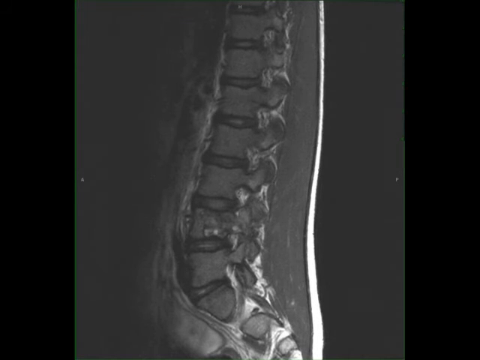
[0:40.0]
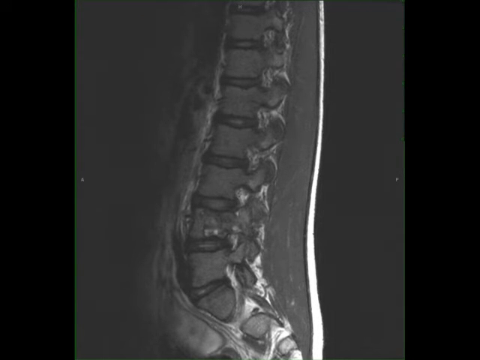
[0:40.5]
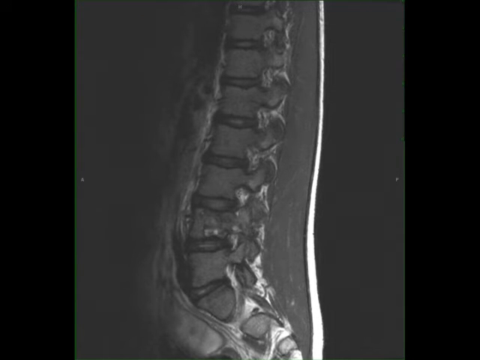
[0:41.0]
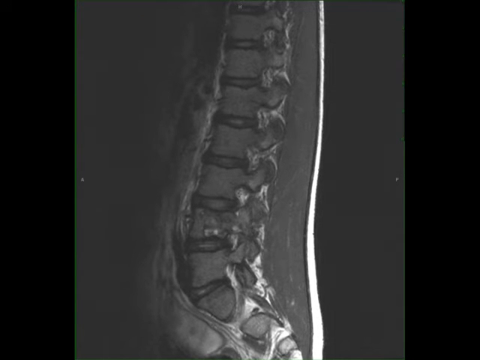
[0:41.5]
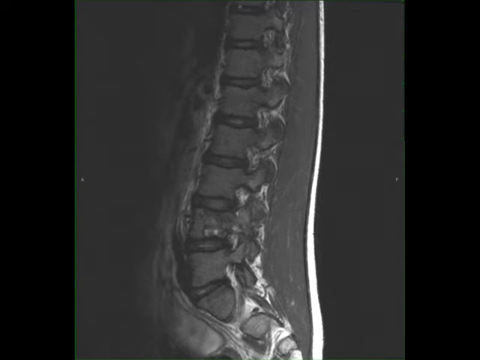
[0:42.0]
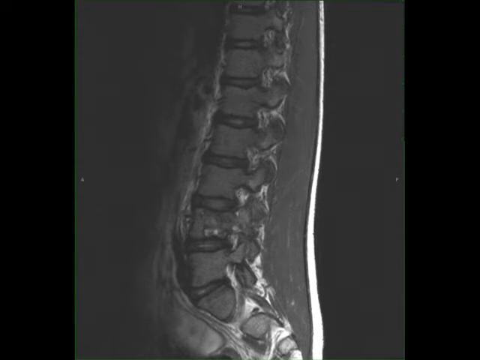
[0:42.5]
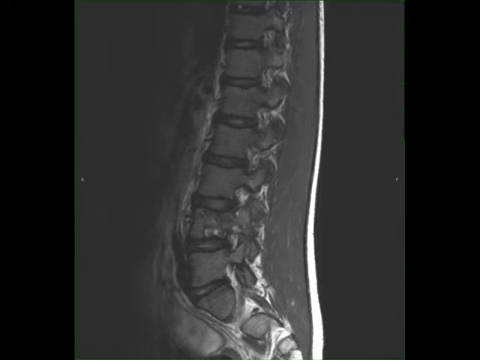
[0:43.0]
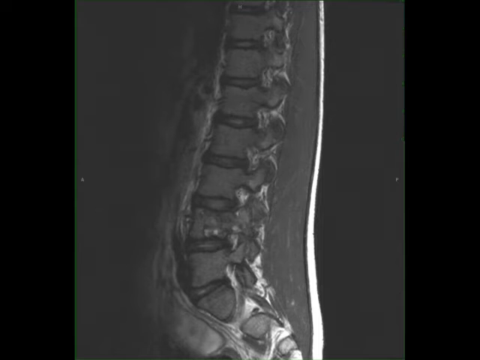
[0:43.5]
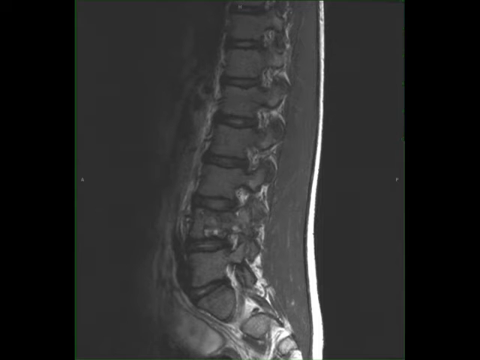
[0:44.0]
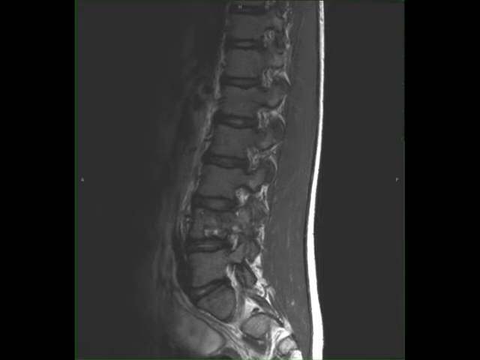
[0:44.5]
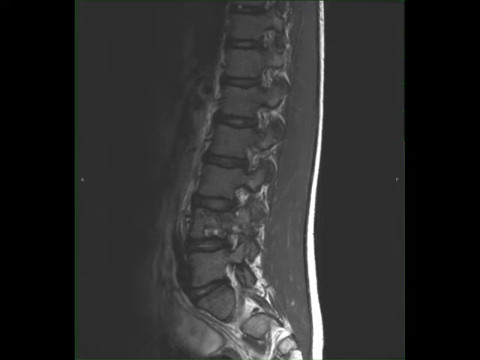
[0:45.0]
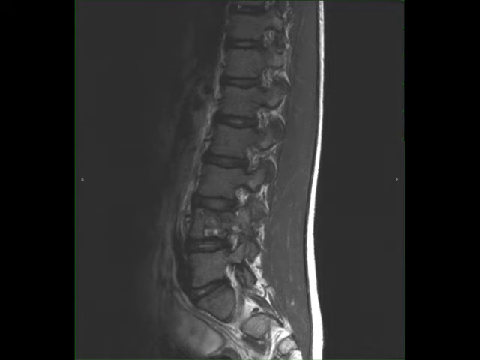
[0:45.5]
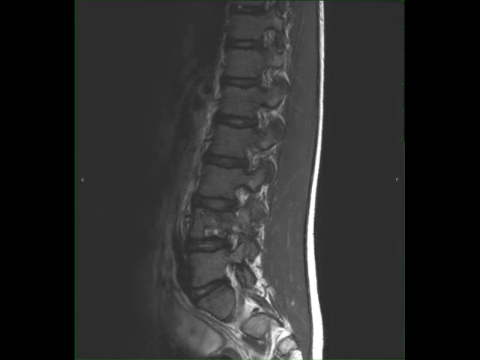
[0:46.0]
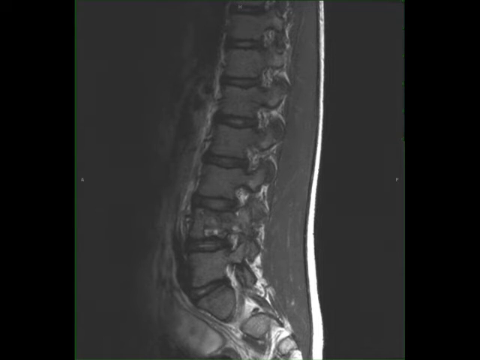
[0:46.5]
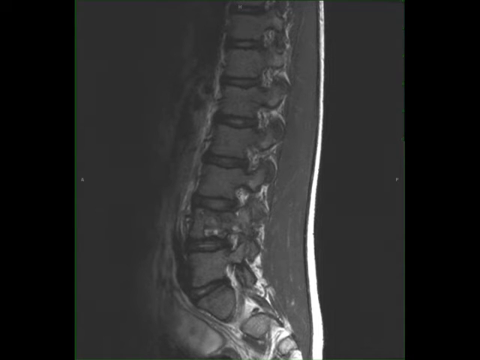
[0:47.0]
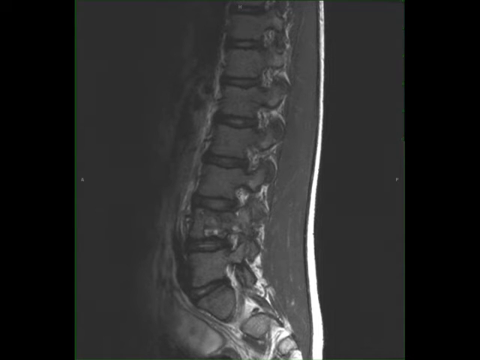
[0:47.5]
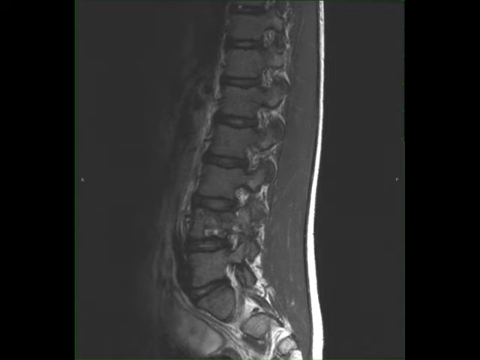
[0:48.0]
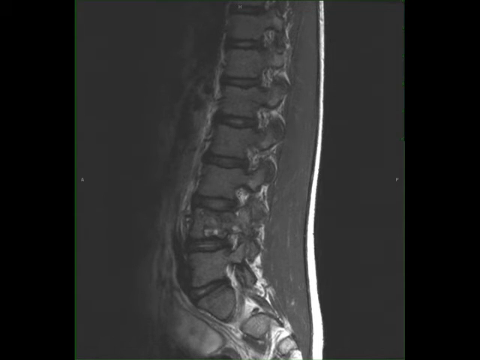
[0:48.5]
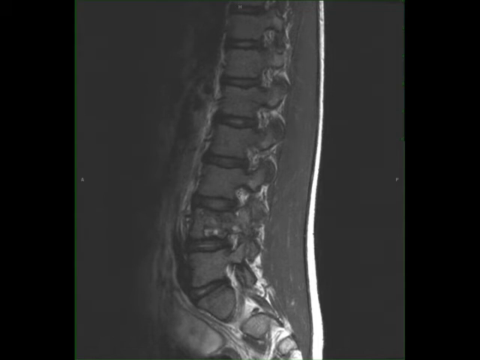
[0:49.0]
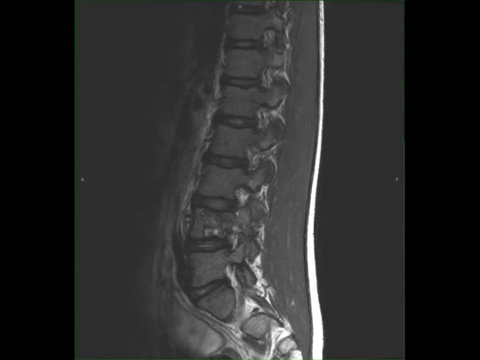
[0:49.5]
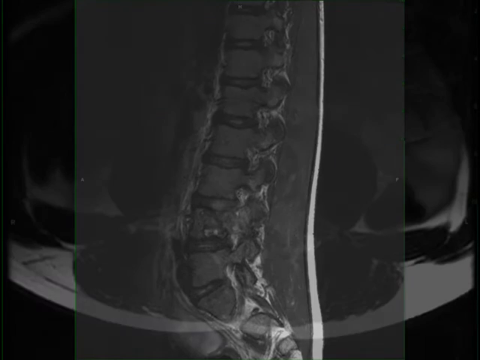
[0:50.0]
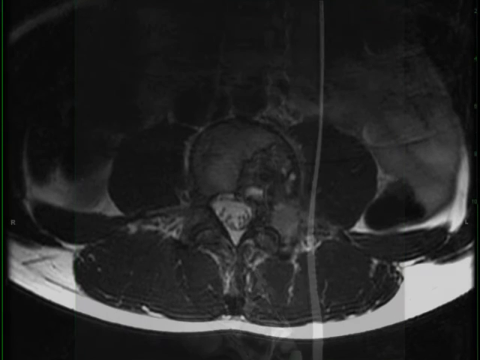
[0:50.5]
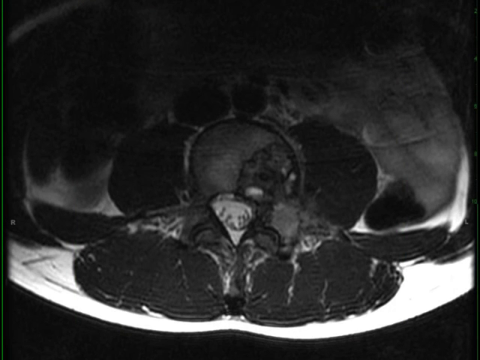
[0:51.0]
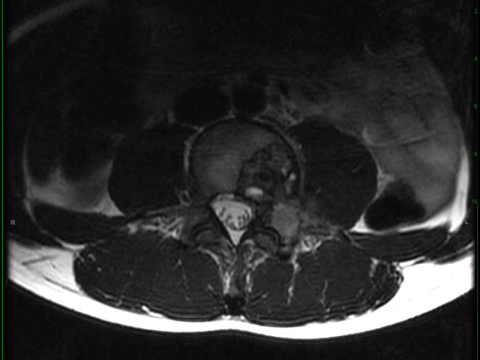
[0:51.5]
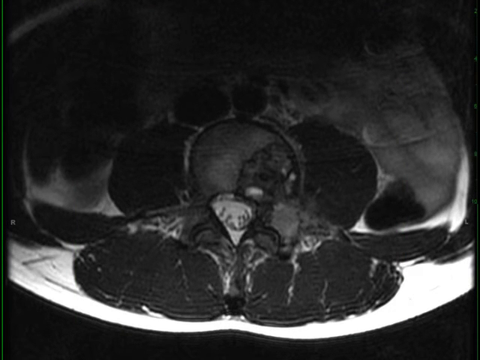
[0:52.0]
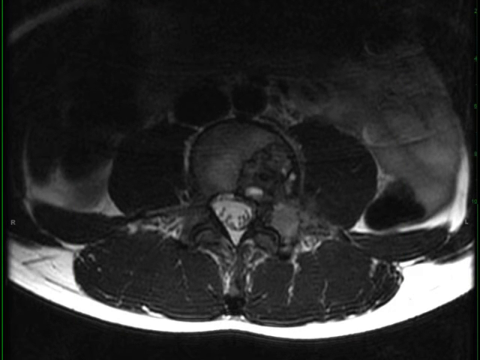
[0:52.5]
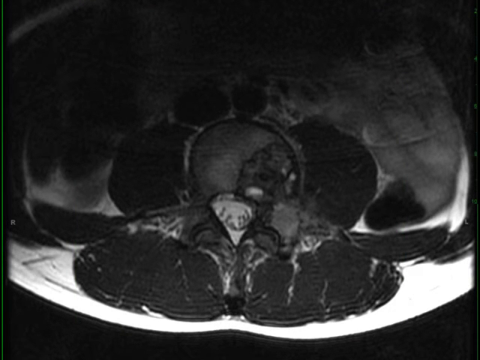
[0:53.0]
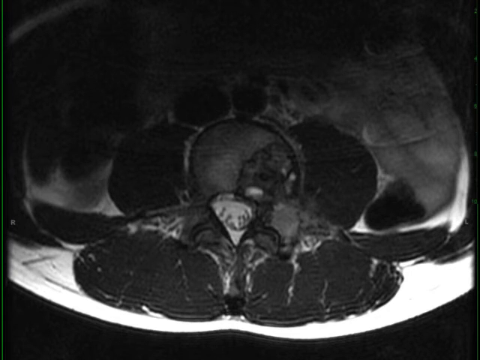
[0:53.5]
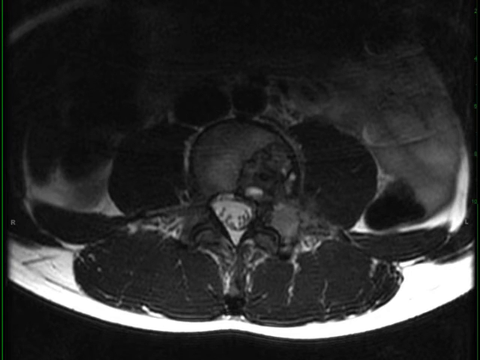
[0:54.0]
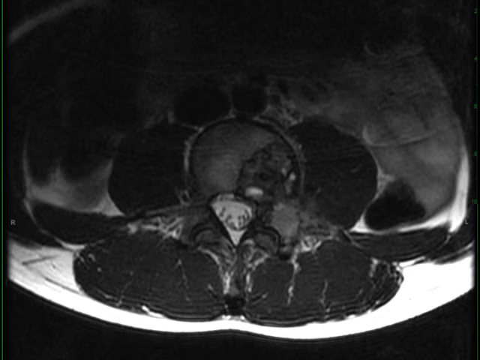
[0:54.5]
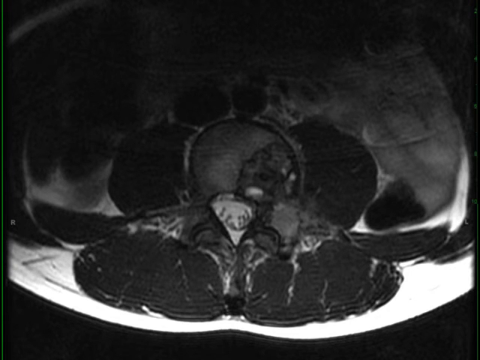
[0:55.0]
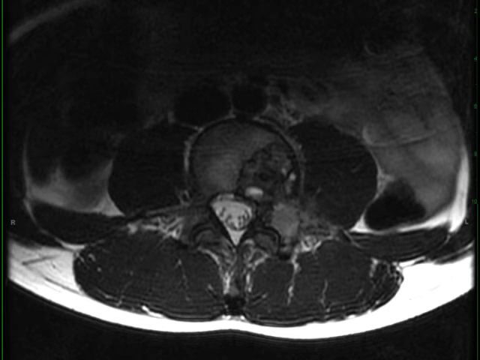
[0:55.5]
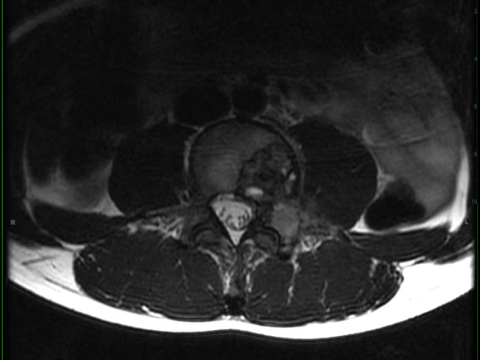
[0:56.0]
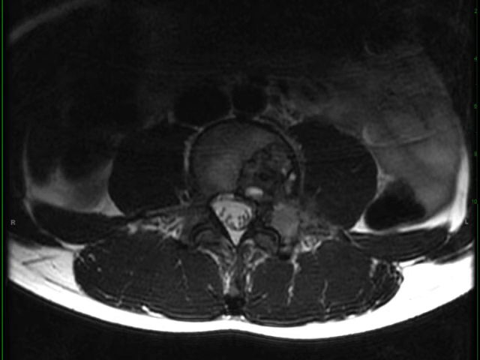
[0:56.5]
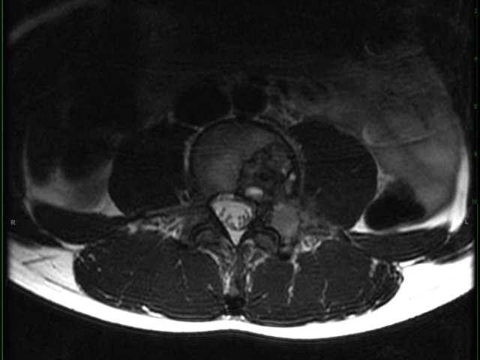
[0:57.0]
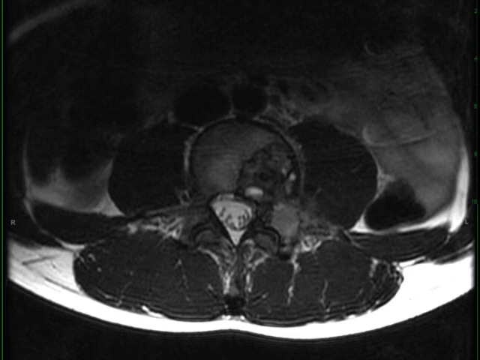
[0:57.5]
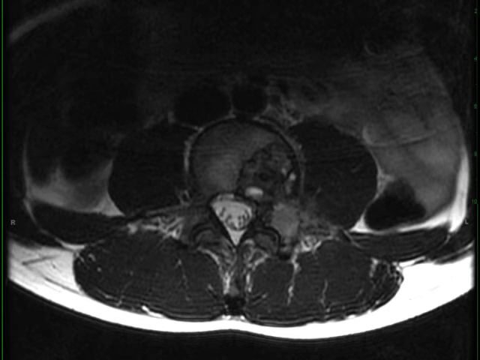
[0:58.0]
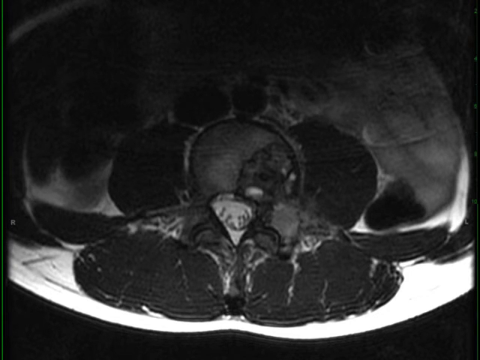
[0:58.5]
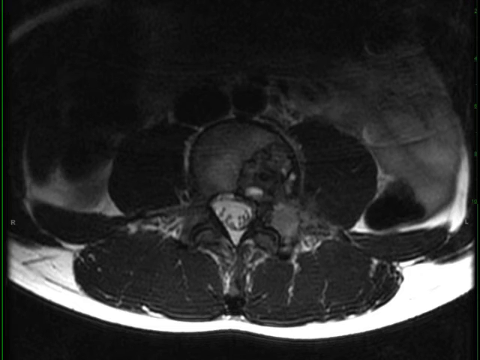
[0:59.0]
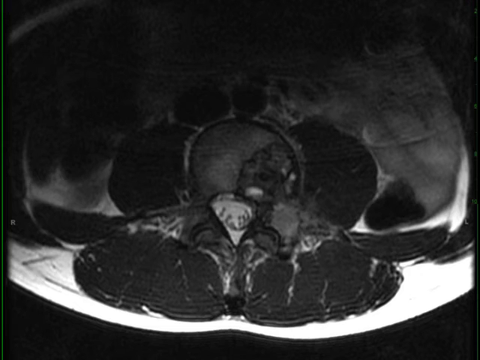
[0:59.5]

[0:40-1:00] A side view of an x-ray shows the spinal column with the vertebrae to the back; seven distinct vertebrae are visible. A flat area takes up a fourth of the way from each side. The middle section is more gray, with the vertebrae a lighter gray and outlined in black. A white line almost in the middle runs from the top to the bottom of the page. Between the second and third vertebrae from the bottom, there looks like something is sticking in, like a little needle placed between the vertebrae. An outline of the person's skin and adipose tissue is visible, and a white area behind the vertebrae produces a more distinctive visual effect. The view then changes to a section looking down on the area before the spinal column. The areas are darker toward the bottom and middle, with two oval areas, a white area in the middle and up toward the back, and a darker light gray area taking up most of the middle column.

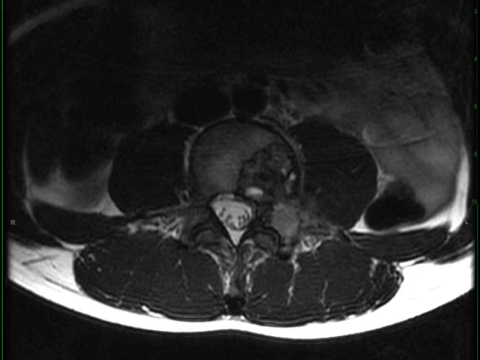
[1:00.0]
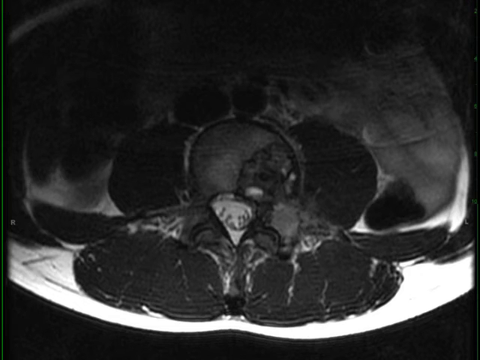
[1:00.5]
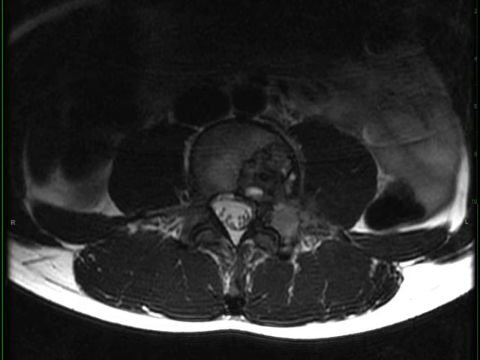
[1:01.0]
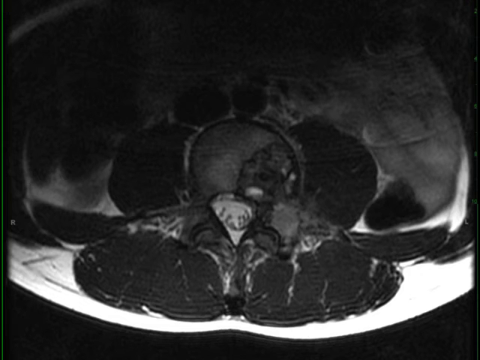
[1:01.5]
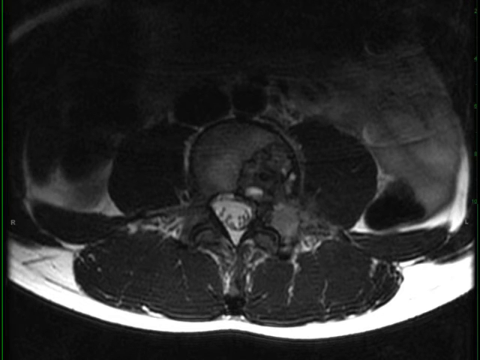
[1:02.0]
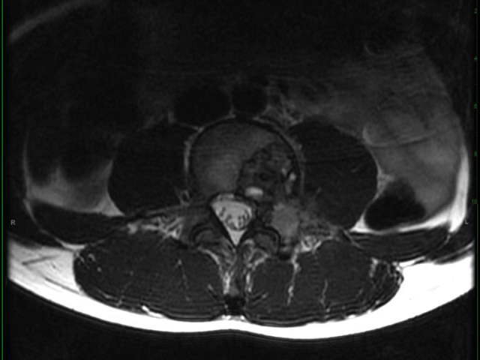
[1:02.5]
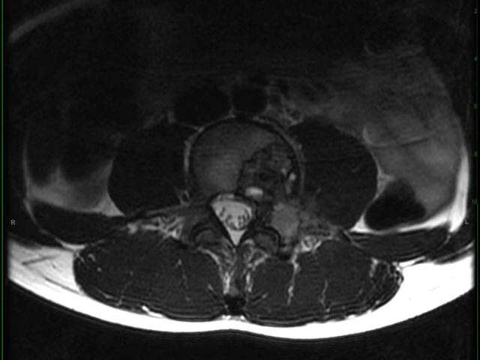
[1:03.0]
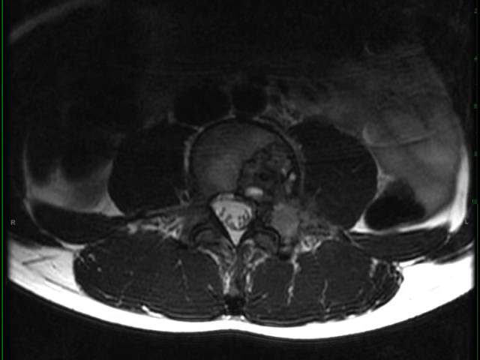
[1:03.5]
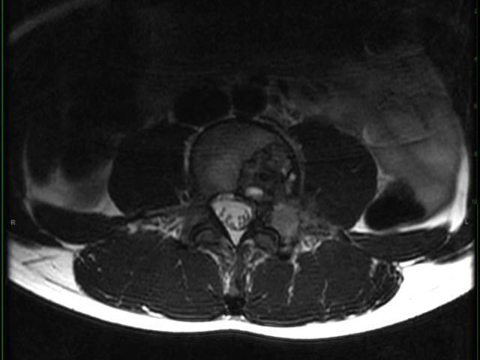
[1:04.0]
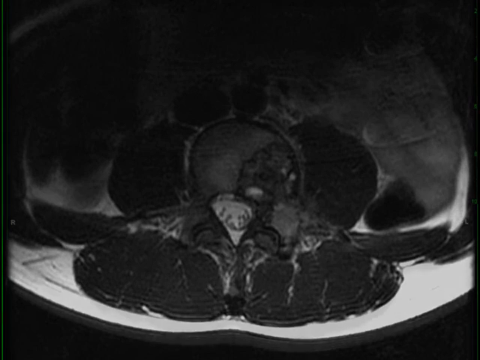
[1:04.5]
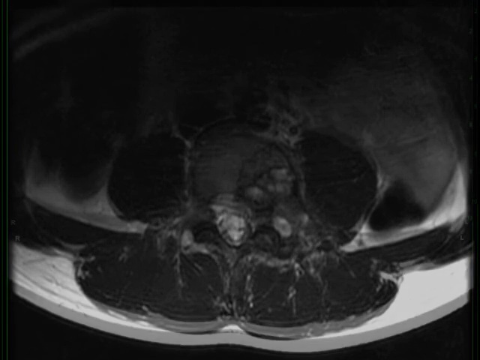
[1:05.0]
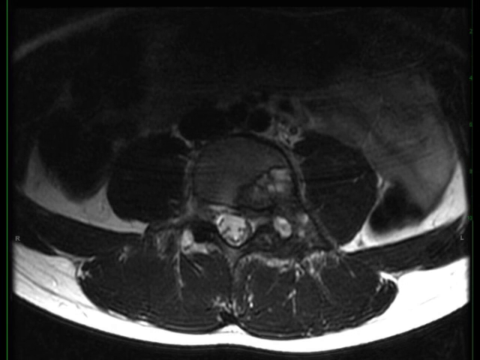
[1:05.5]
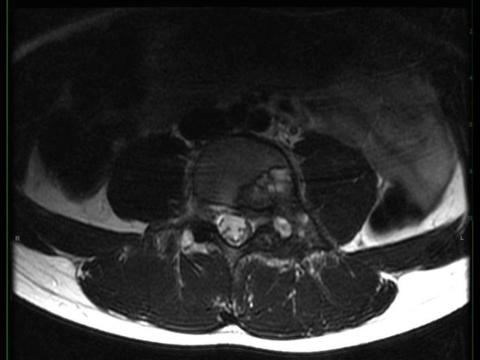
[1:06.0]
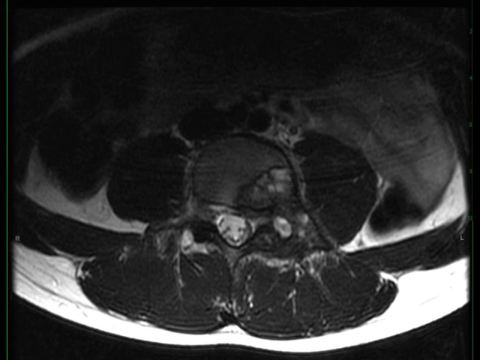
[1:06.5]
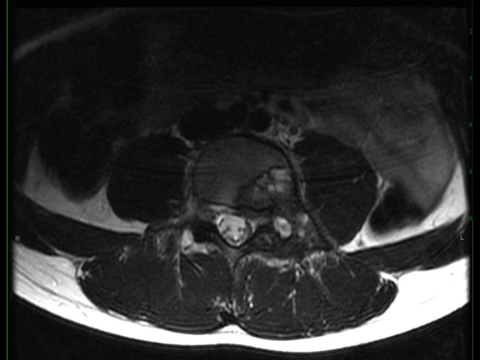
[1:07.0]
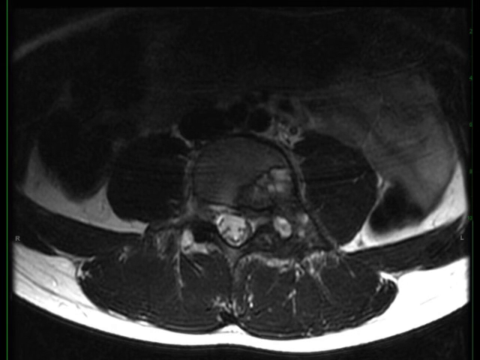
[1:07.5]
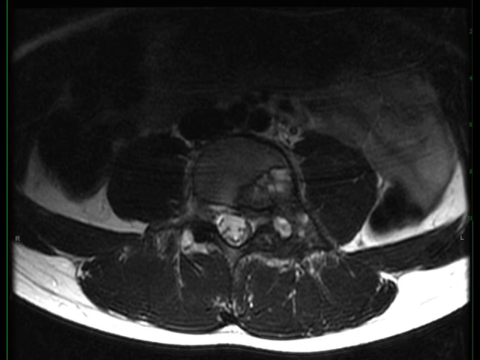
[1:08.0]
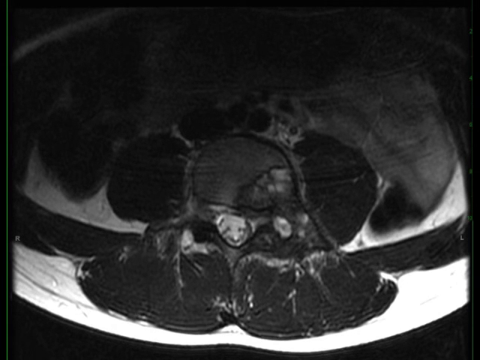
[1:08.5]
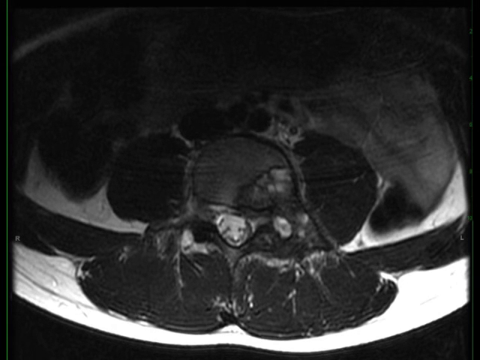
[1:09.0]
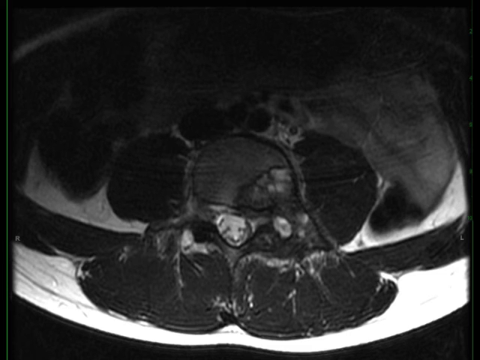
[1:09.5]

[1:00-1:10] The view looks down on the top section of the x-ray, which moves and changes slightly; it has distinctly been moved with a cursor to change the viewing direction. At the bottom are two gray areas, in the middle is a V-shaped area, and along the outside are the outlines of the areas, with a larger area at the top. In one of the segments, white behind it makes the x-ray features very distinctive. The two bottom oval objects are a darker gray and have some white lines going through them.